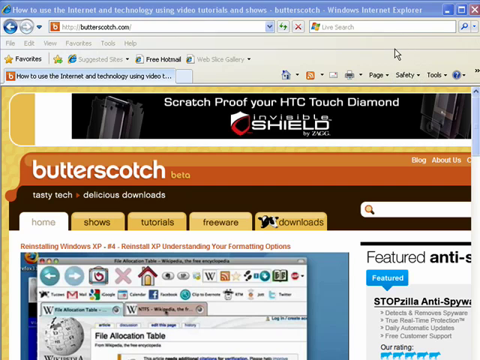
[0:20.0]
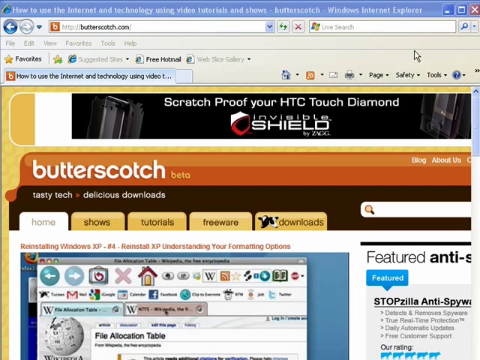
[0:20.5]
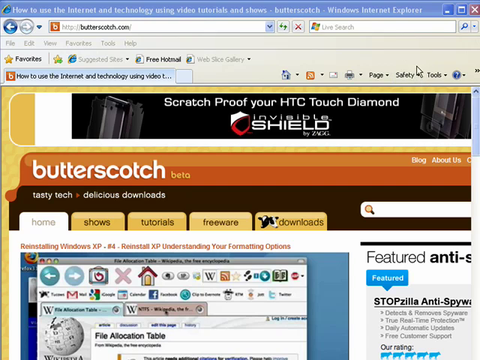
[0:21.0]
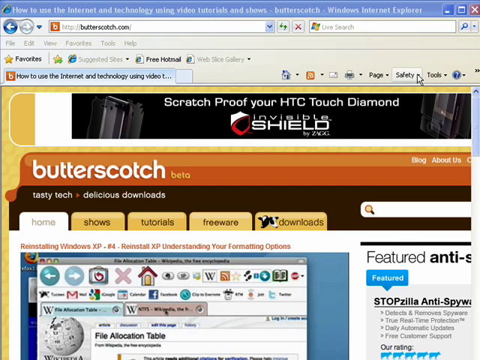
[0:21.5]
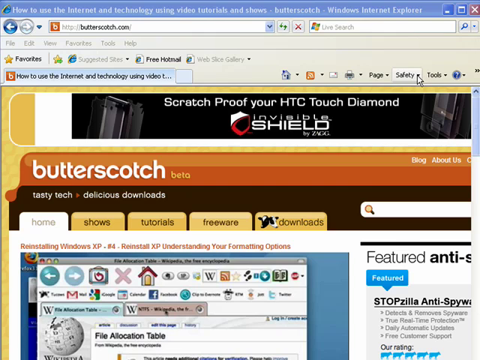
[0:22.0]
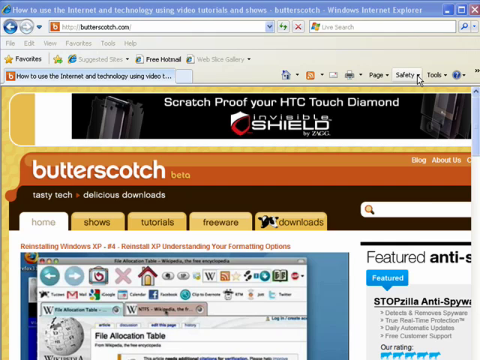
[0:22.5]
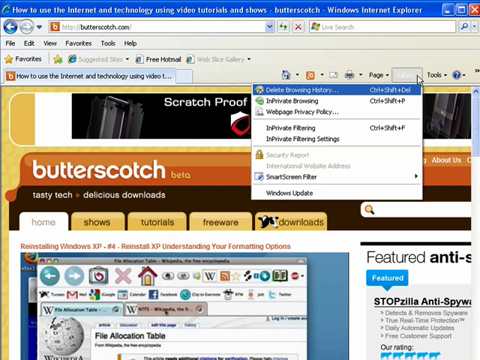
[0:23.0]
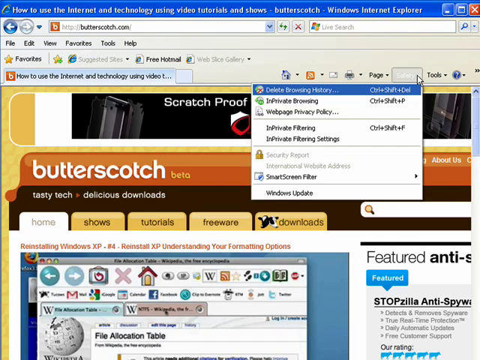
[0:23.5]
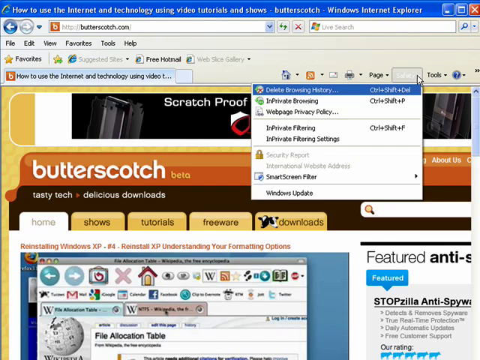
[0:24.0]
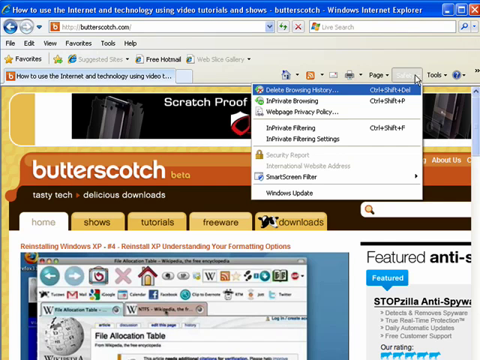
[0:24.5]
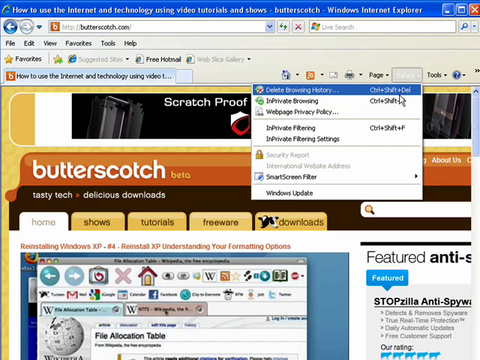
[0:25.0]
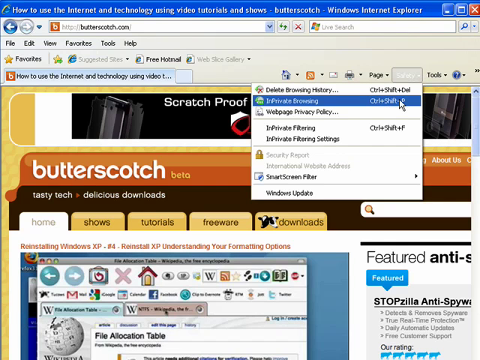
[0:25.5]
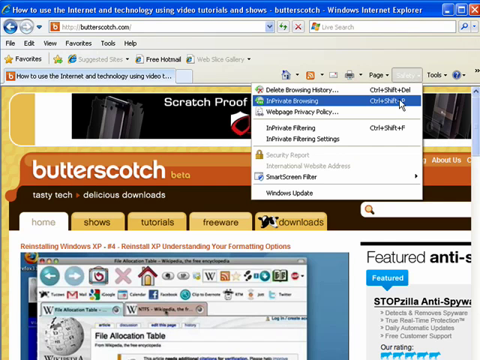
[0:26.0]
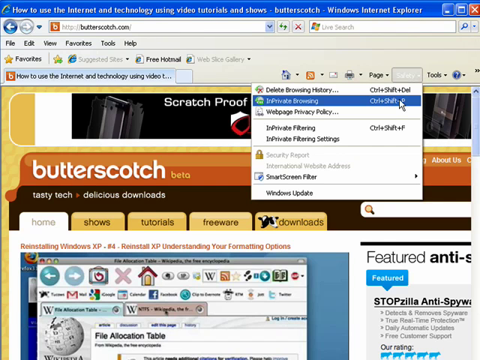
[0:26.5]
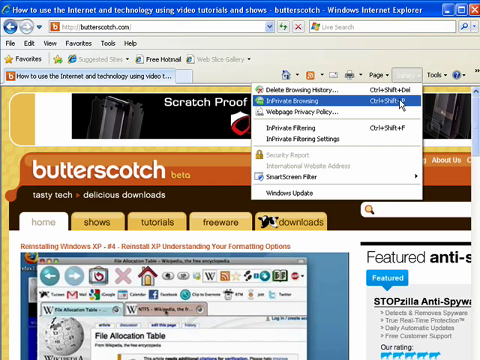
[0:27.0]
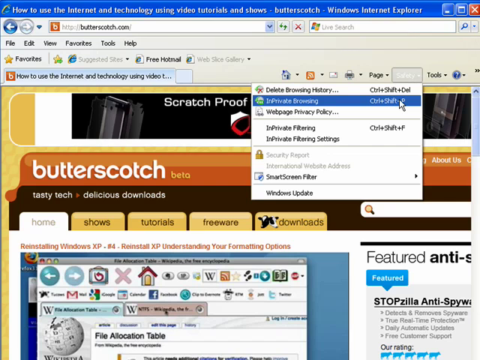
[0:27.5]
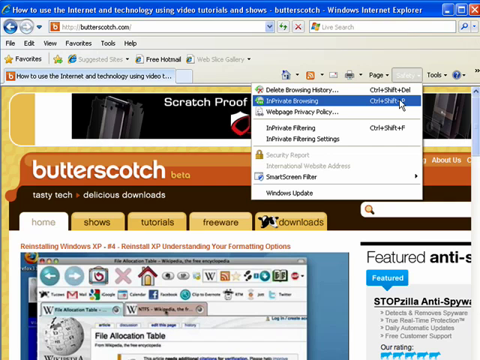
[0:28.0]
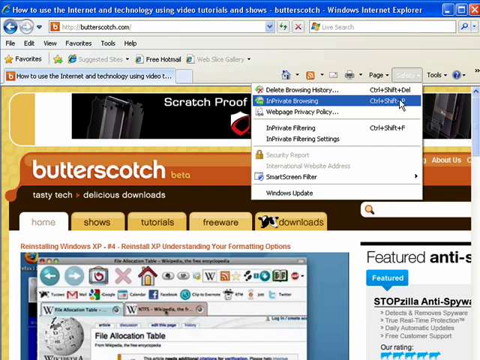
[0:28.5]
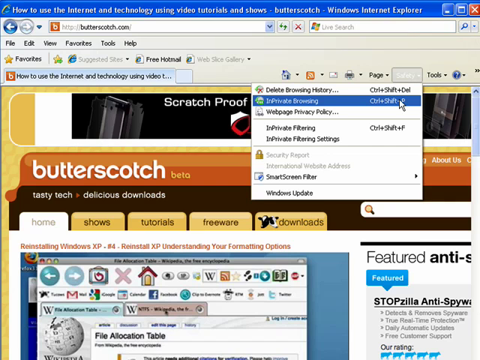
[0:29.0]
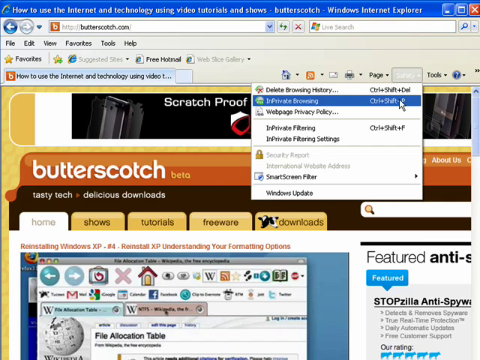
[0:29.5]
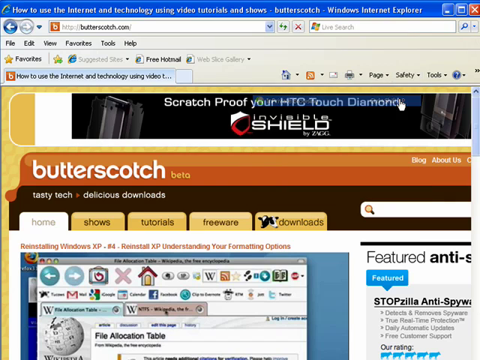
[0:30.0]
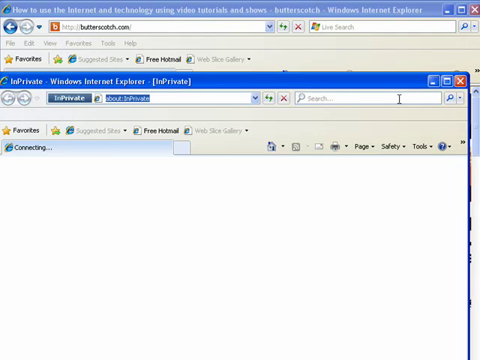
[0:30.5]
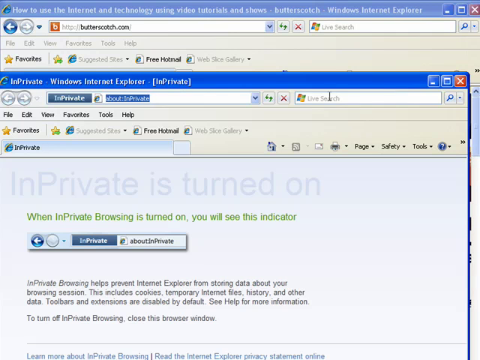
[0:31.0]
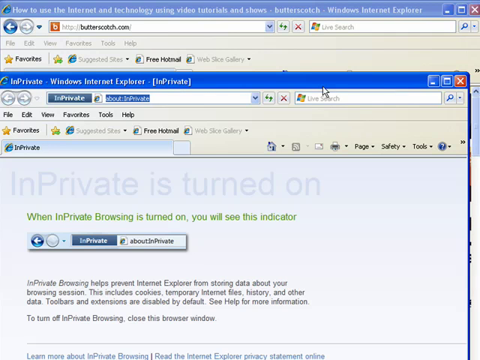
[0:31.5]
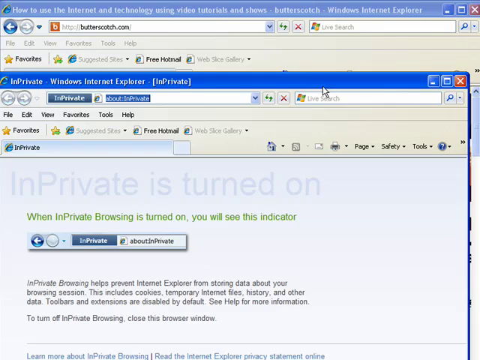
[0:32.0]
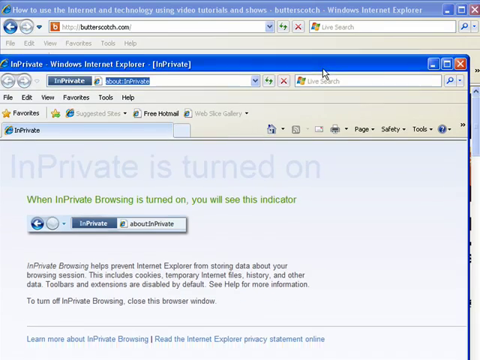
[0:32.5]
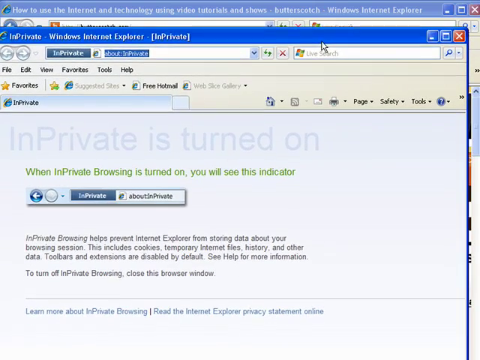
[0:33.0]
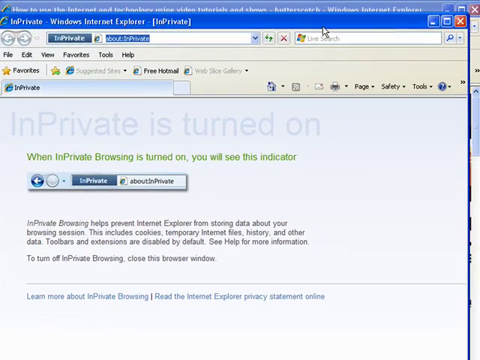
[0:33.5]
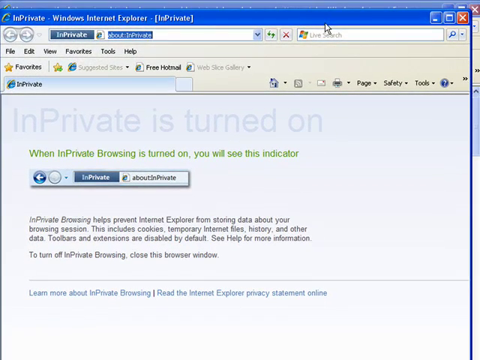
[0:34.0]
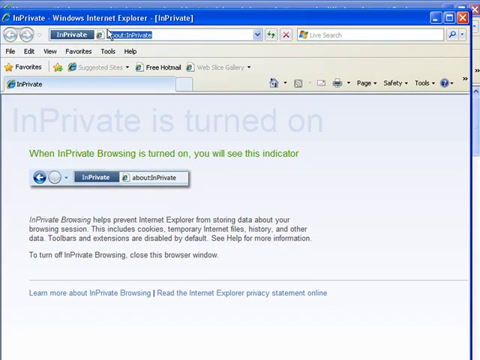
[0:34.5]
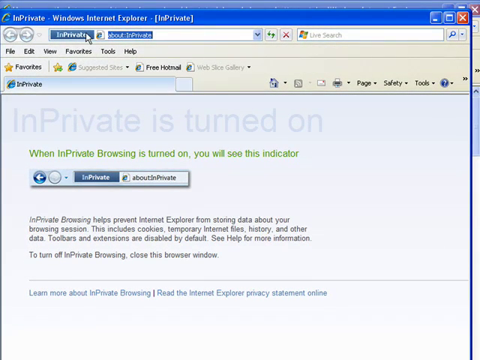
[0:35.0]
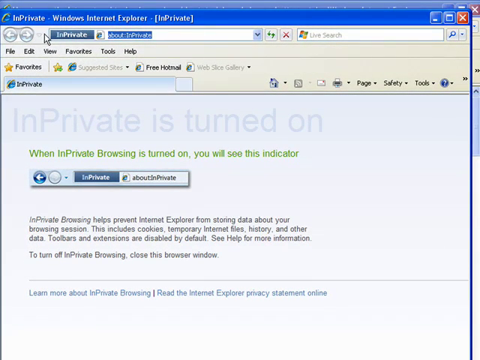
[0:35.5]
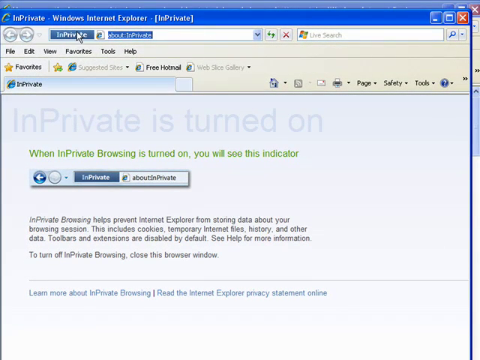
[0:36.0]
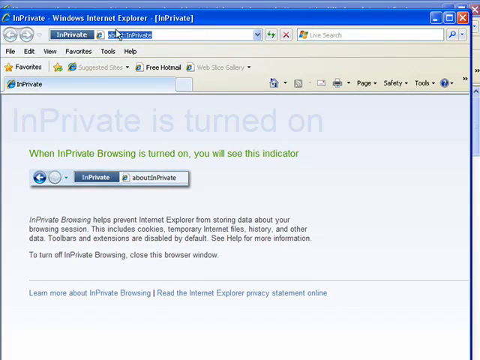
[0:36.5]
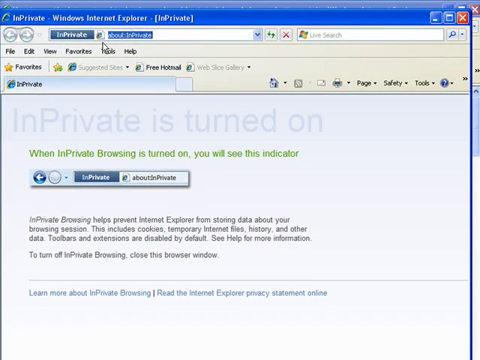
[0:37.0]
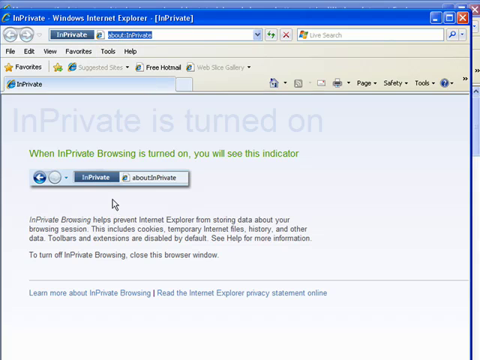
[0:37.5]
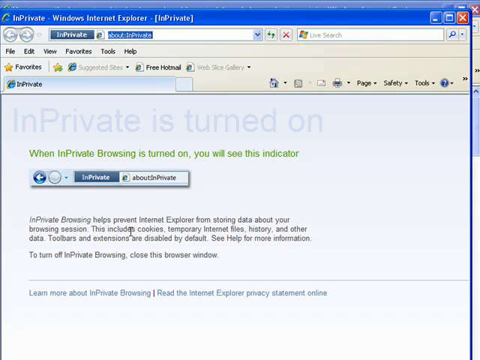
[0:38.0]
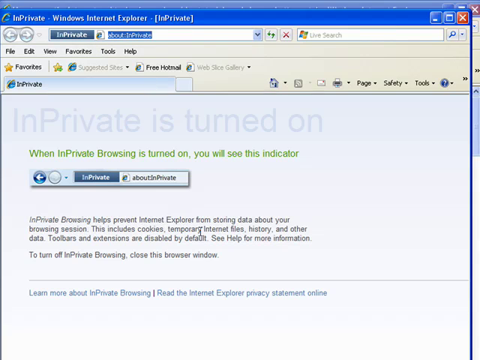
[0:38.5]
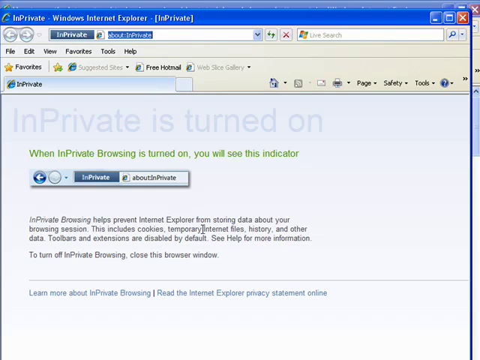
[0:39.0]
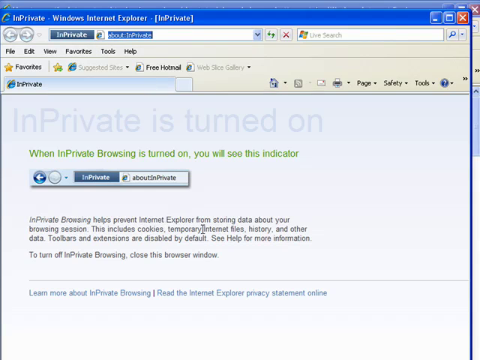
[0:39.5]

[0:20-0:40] The busy butterscotch.com webpage is on screen. At the top of the Internet Explorer window, the title reads "how to use the internet and technology using video tutorials and shows - butterscotch - Windows Internet Explorer." The cursor moves around the screen and clicks the button called "safety" on the Internet Explorer ribbon, then goes down to a button or label reading "in private browsing," which can also be accessed with Ctrl+Shift+P. The cursor clicks on "in private browsing," which brings up a new Internet window titled "in private Windows Internet Explorer" followed by "in private" in brackets.